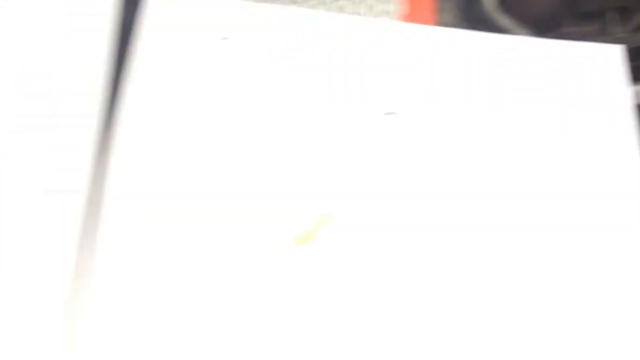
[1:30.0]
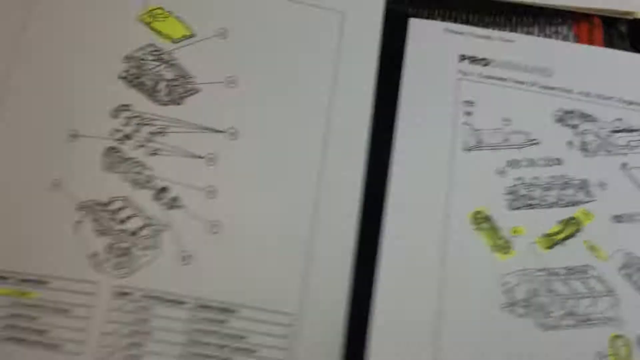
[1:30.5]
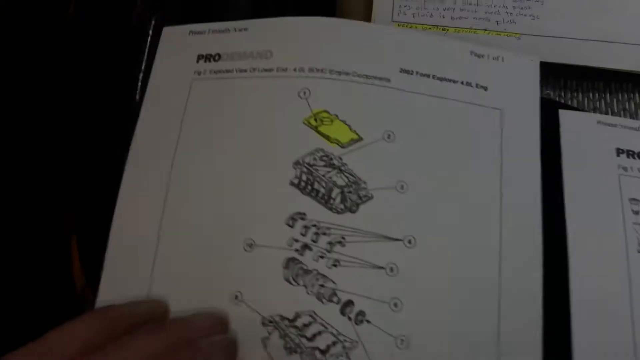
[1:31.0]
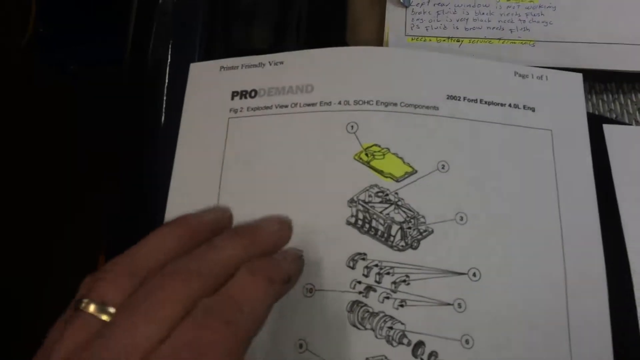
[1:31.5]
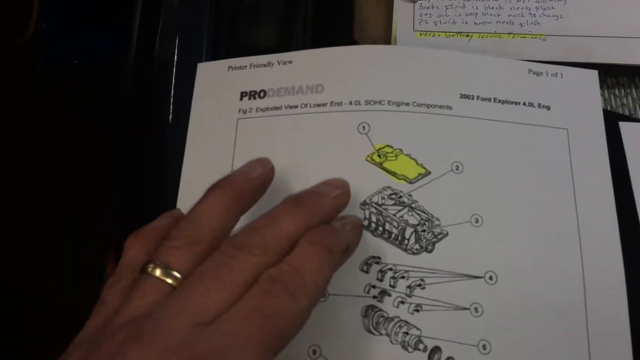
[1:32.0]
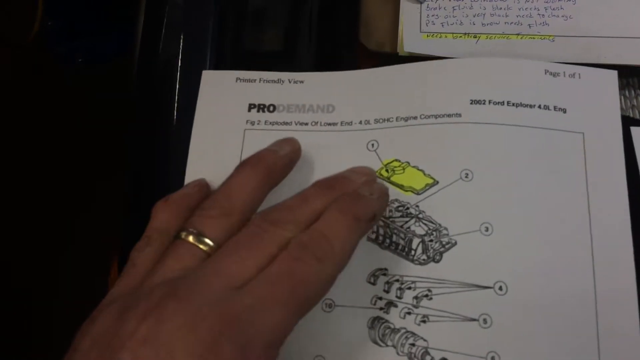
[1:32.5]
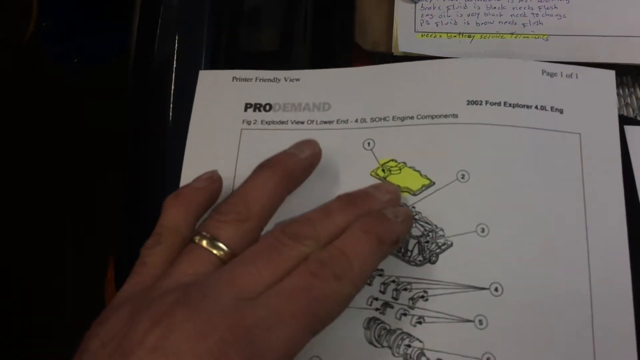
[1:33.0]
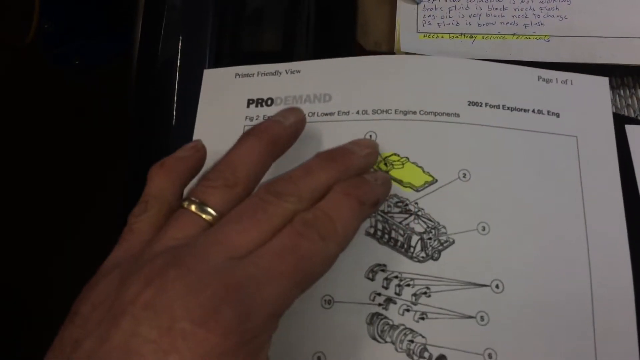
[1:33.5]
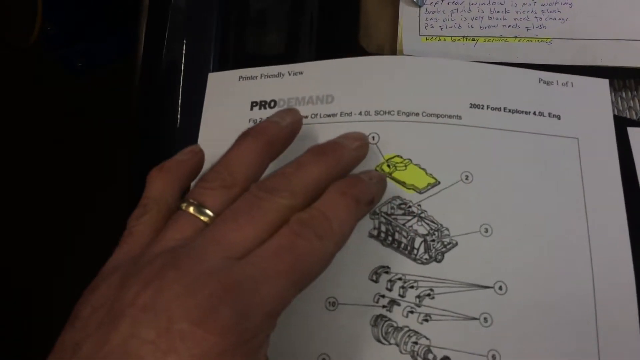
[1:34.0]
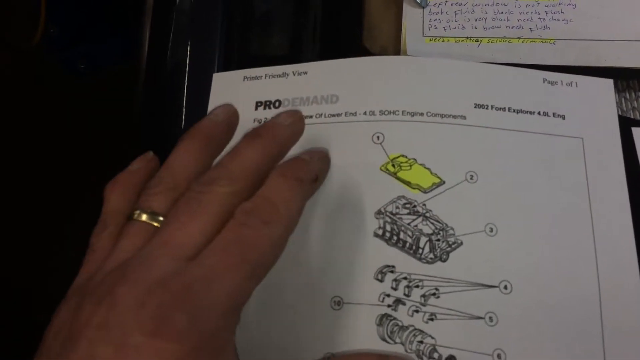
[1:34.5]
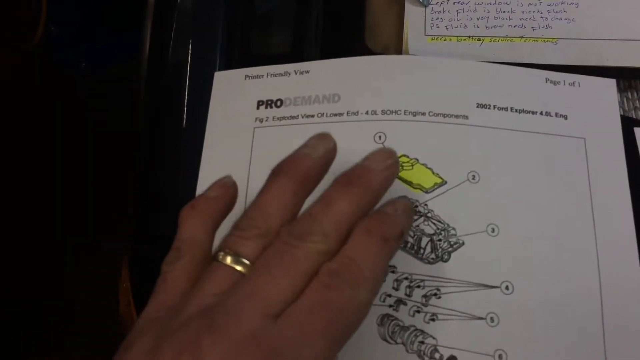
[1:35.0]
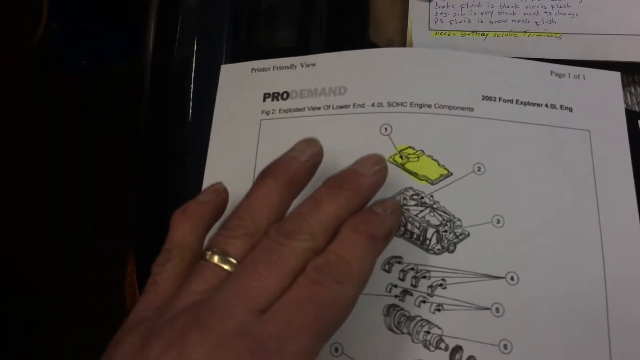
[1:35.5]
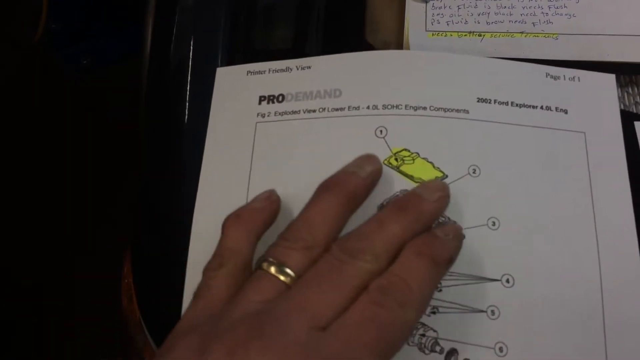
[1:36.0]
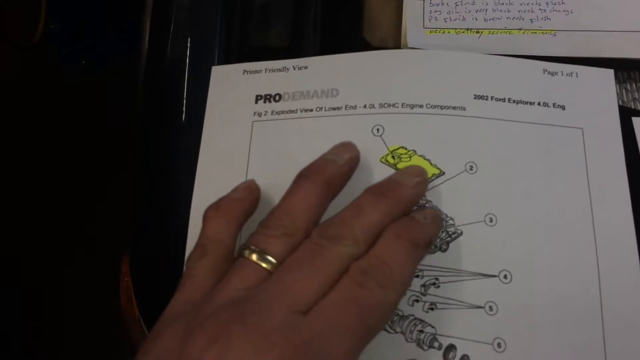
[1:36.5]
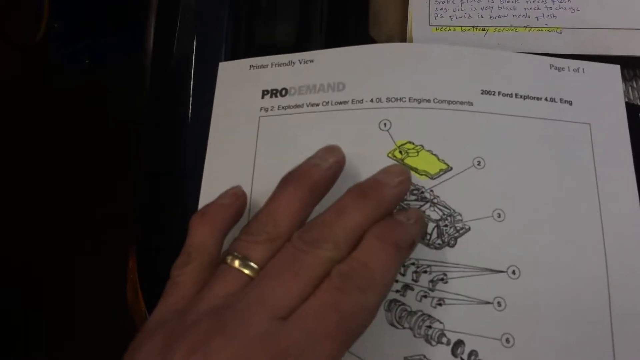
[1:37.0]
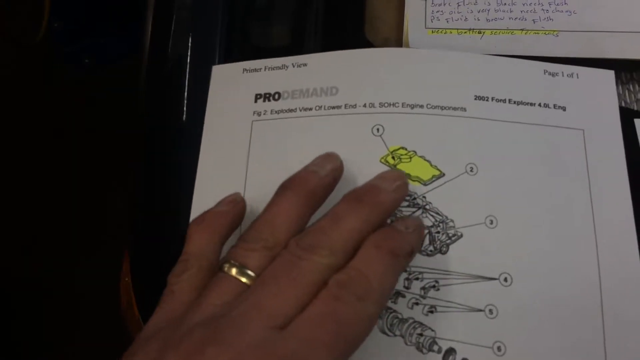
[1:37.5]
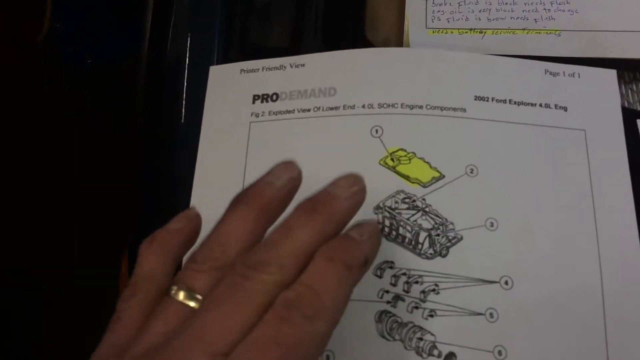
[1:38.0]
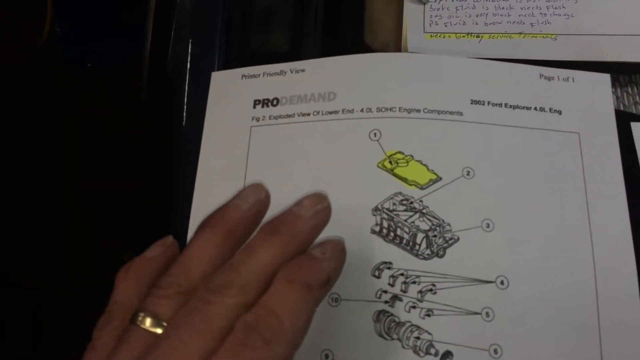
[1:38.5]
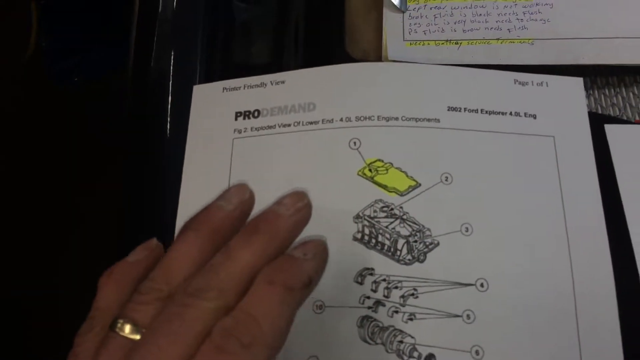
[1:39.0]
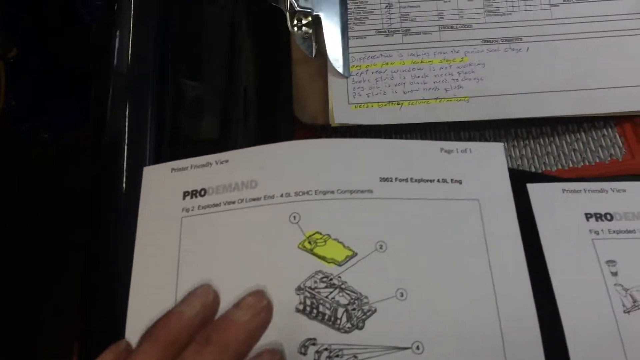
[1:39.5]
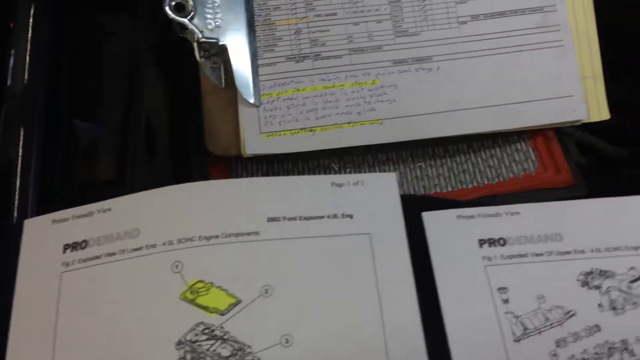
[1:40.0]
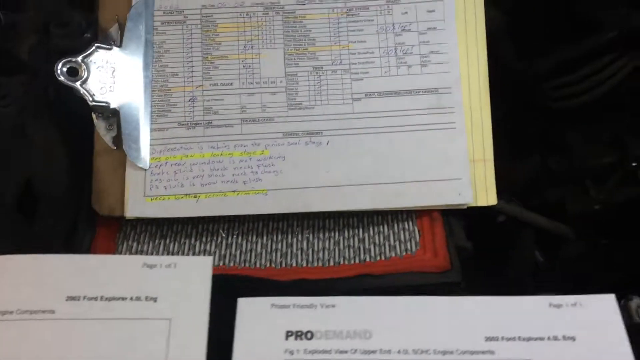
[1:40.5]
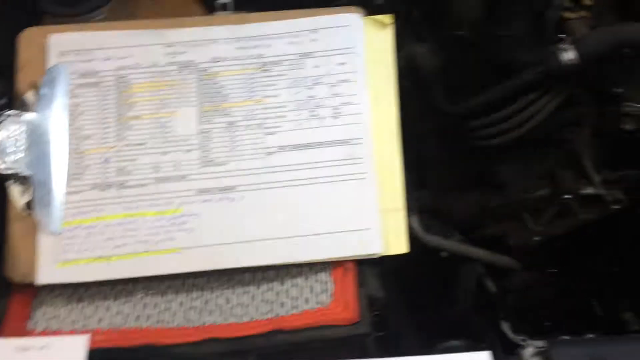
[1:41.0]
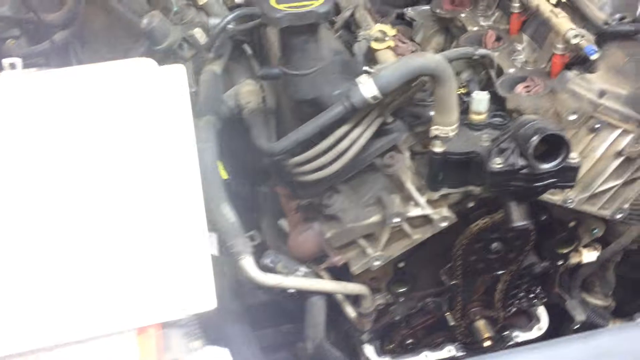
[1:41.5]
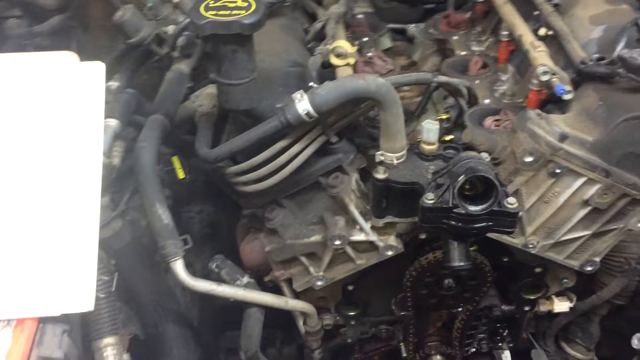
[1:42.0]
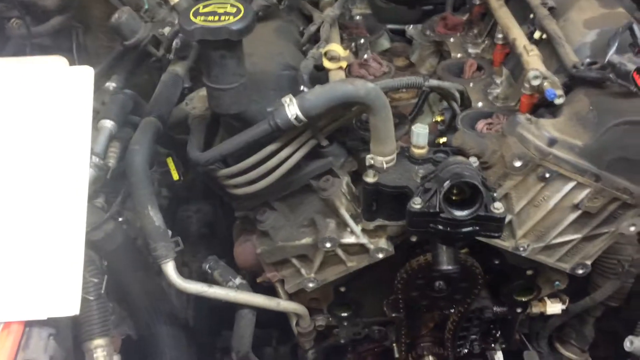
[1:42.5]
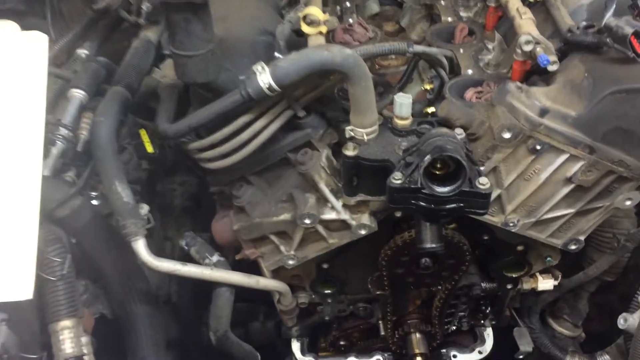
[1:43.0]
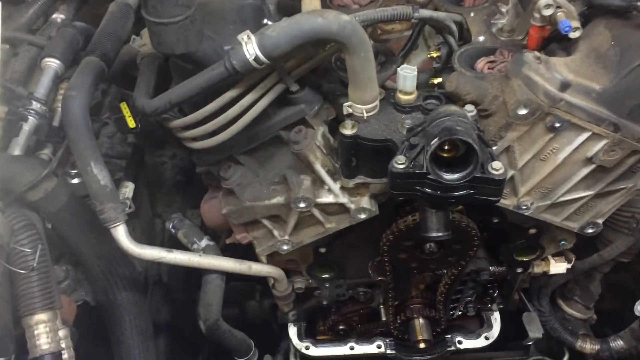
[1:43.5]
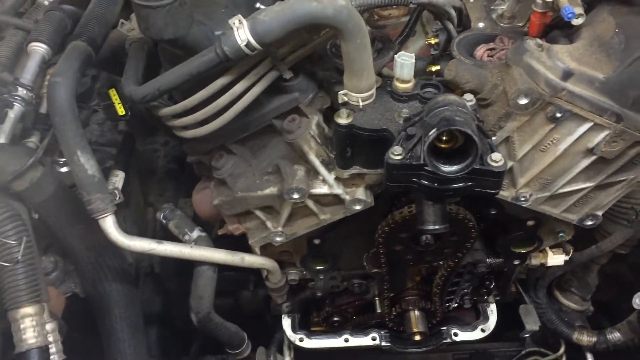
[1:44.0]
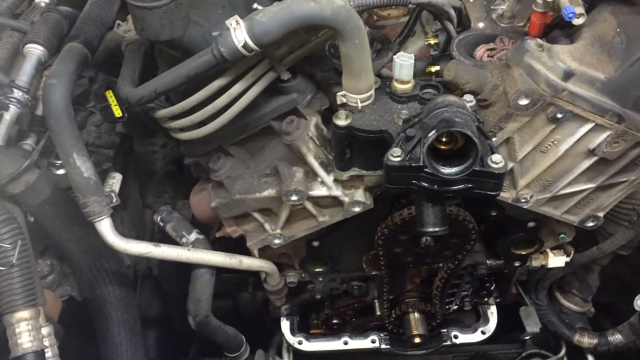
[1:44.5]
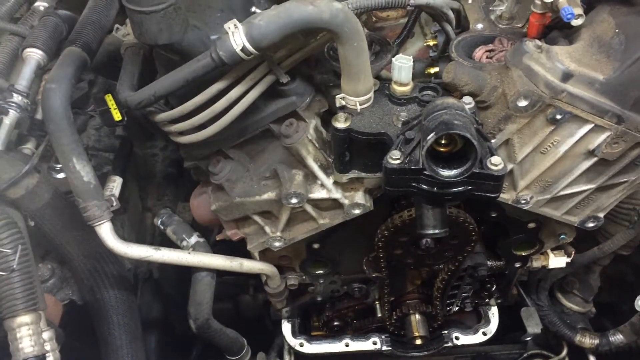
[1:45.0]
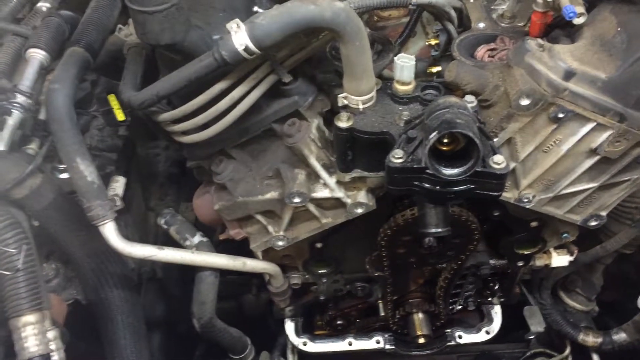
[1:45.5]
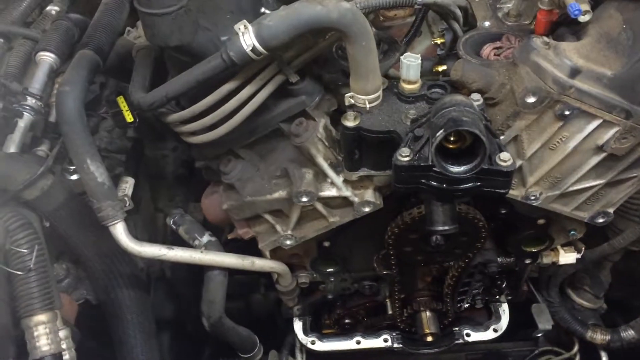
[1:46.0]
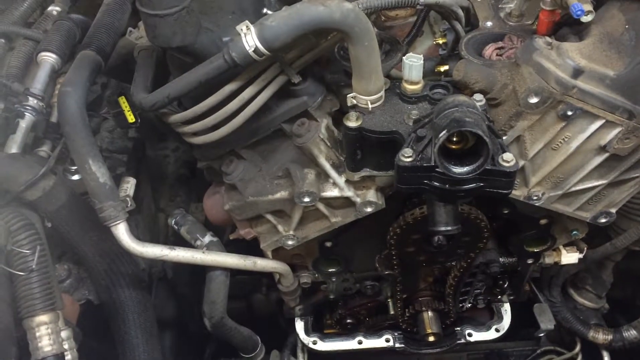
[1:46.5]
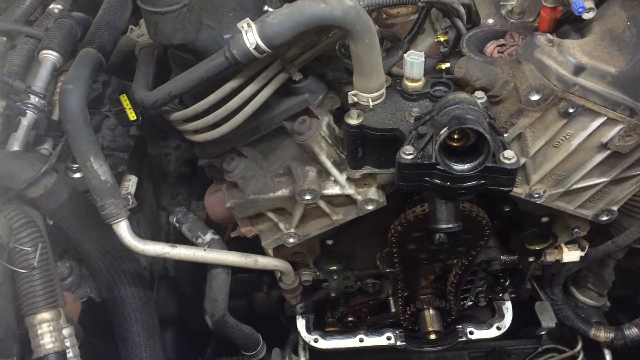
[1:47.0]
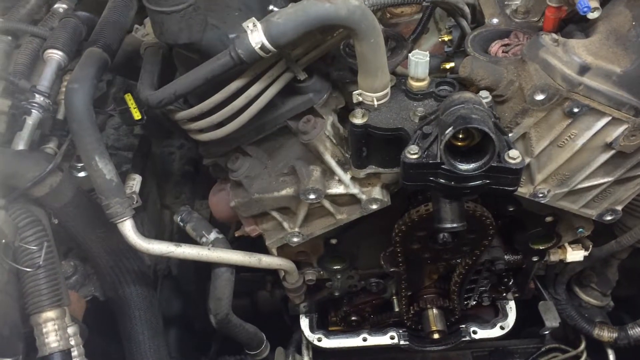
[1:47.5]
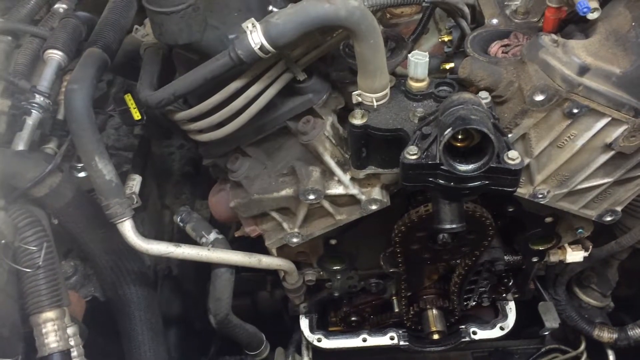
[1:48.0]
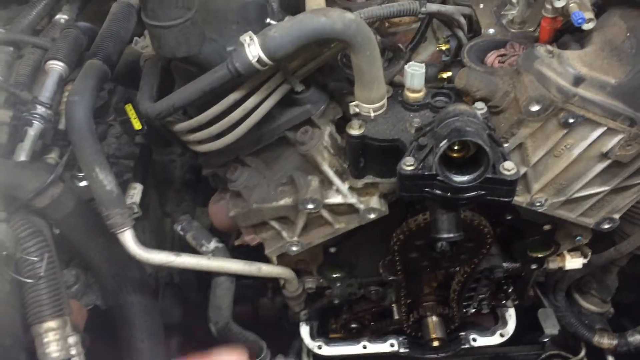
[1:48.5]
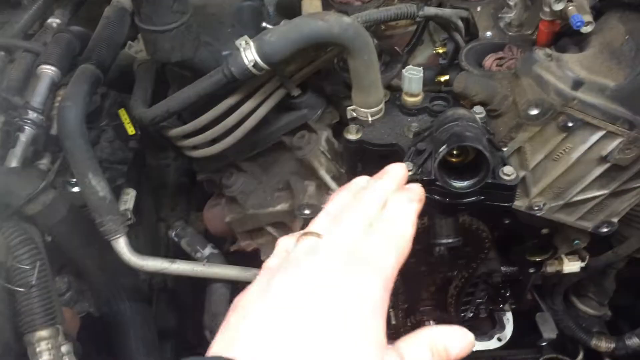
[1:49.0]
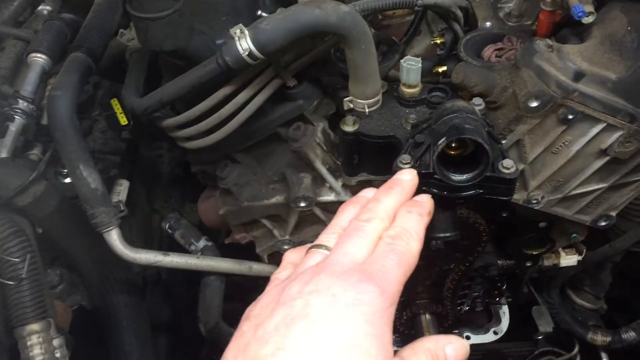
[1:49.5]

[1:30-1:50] The shot starts under the hood of the car, but the man quickly goes back to the pages of sketches and turns to a different page with the same font and paper. It reads "2002 Ford Explorer" and shows a few engine components. He uses his hands to circle around the components, seemingly describing them. This time the topmost component is highlighted in neon yellow; the sketches are black and white, numbered, on white paper, and enclosed in one single box. He moves the camera around, briefly showing a few more pieces of paper, one of which is like a table with some highlighted numbers. He then returns to the hood of the car and points with all four fingers at another part, which looks something like a camera: a black, rectangular component with a large dusty tube on top of it that connects to another part of the car. This tube is connected to the chain shown earlier.